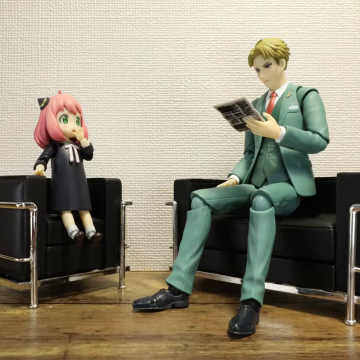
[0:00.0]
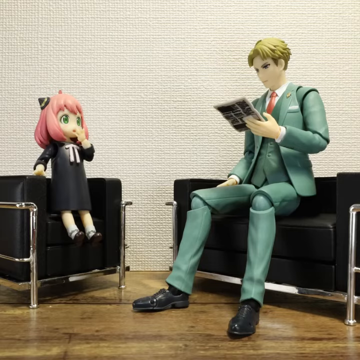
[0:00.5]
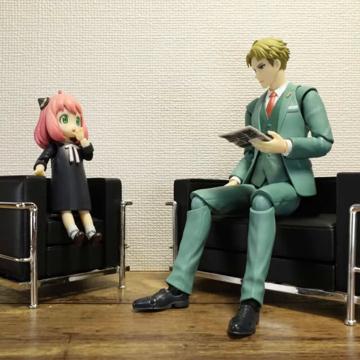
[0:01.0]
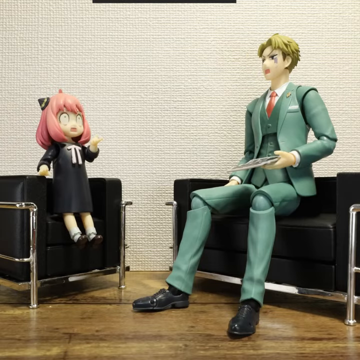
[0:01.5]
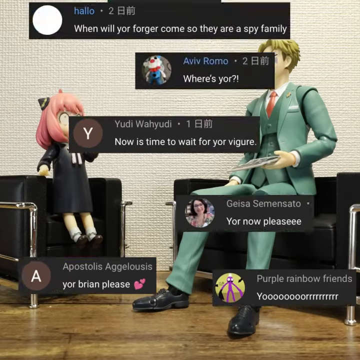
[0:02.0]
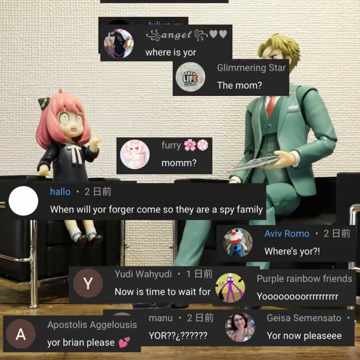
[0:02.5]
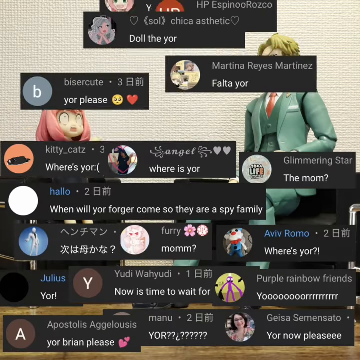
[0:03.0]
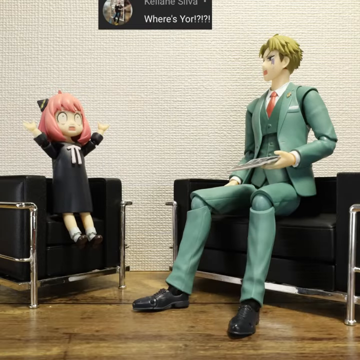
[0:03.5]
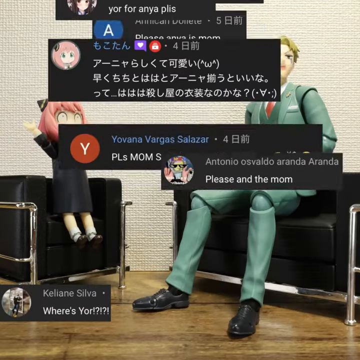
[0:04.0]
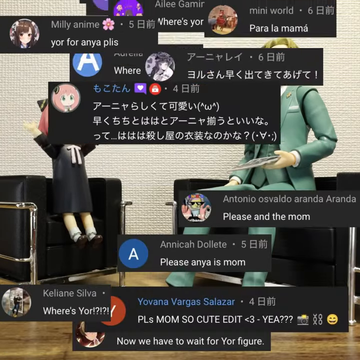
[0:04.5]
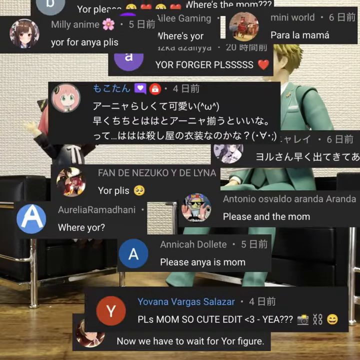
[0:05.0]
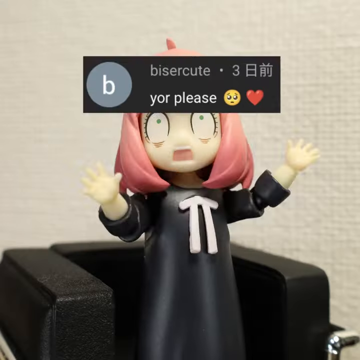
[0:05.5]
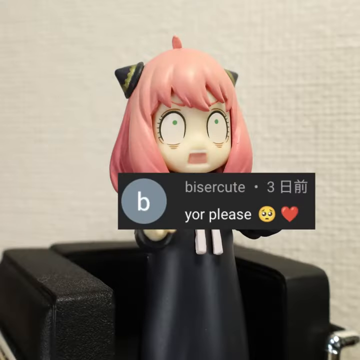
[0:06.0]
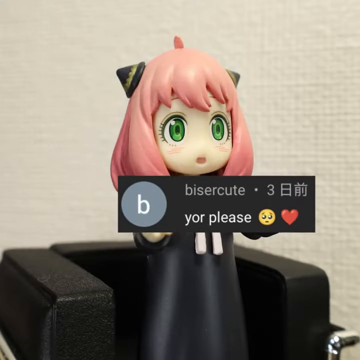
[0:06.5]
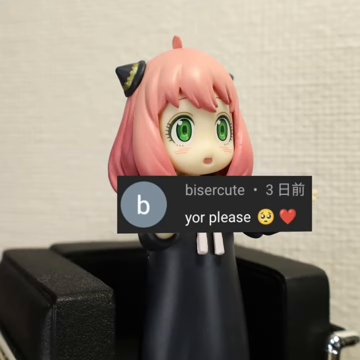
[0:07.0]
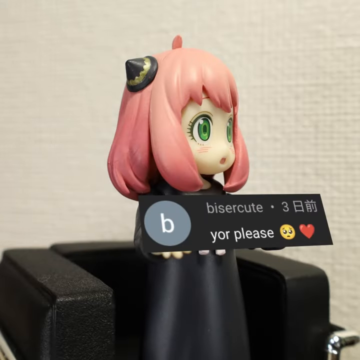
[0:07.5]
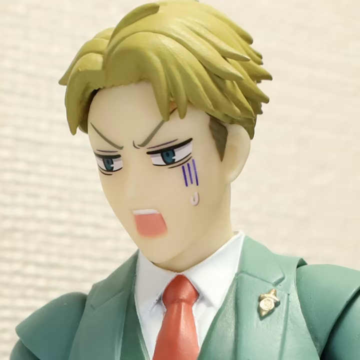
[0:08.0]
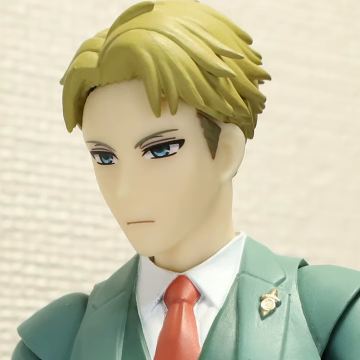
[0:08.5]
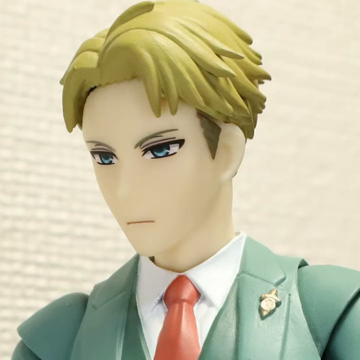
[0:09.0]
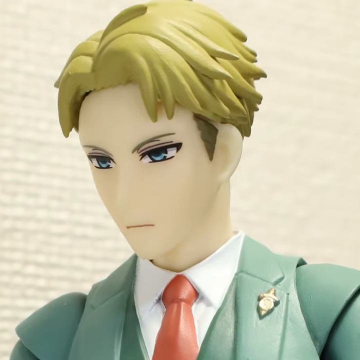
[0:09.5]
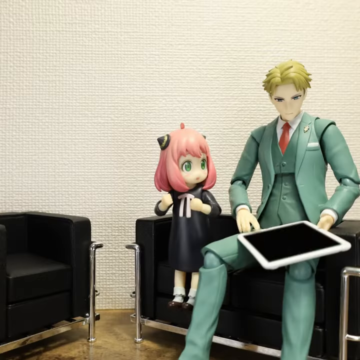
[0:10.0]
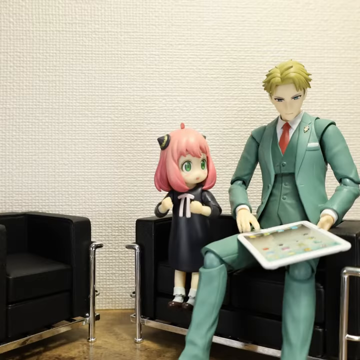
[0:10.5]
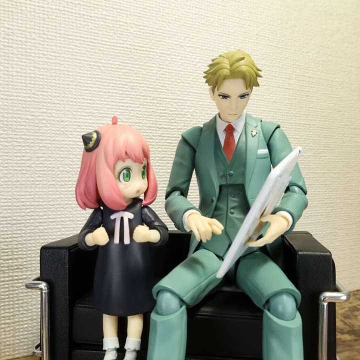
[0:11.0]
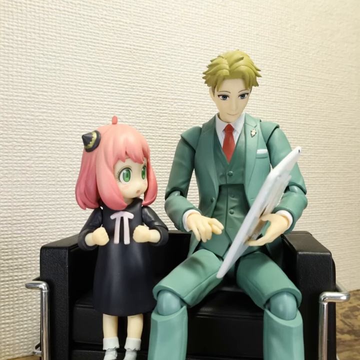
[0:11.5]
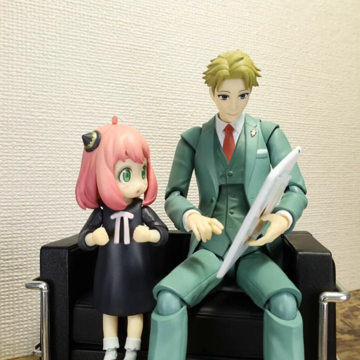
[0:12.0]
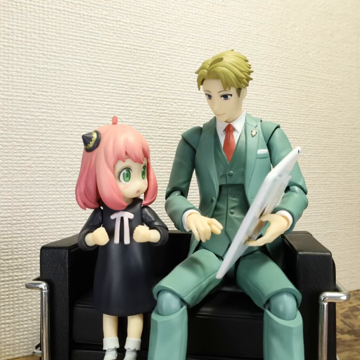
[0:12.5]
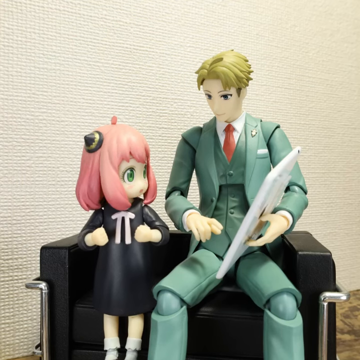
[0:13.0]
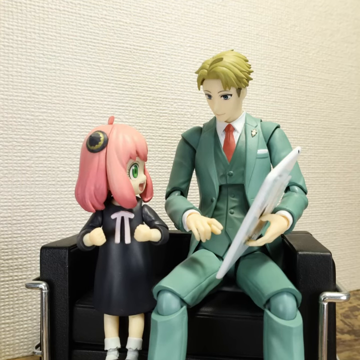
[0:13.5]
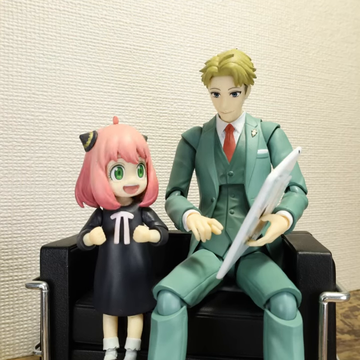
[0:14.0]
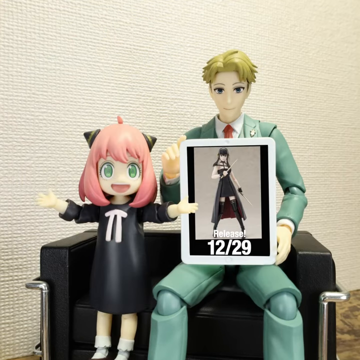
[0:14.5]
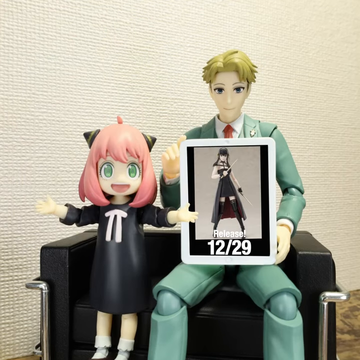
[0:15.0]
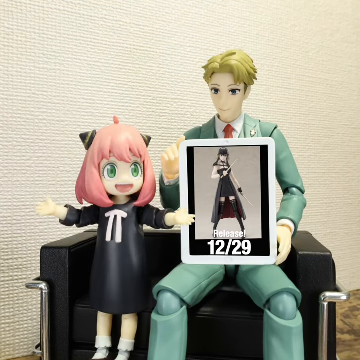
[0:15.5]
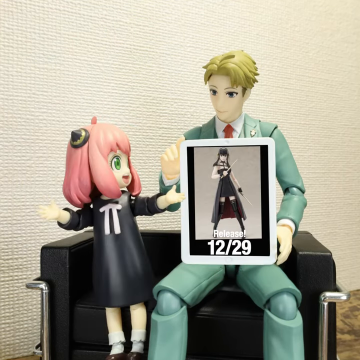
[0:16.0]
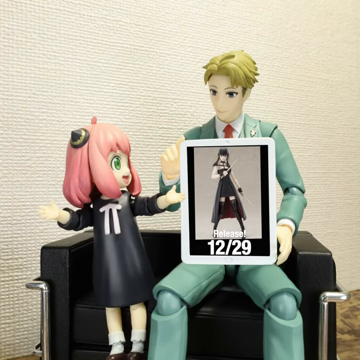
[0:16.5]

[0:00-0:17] The video features cartoon characters. It opens with a young girl with pink hair in a black dress, sitting on a black chair. A man with blonde hair in a green suit is holding a computer. They have an iPad, and he looks something up on it; it shows a tall woman in a black dress, and they look very happy. Meanwhile, a bunch of what look like chat things fall down on them. They are very happy when they reach the point where they can see a release date of 12-29. The release appears to be for some type of drummer, possibly, as the girl seems to be holding two drumsticks.